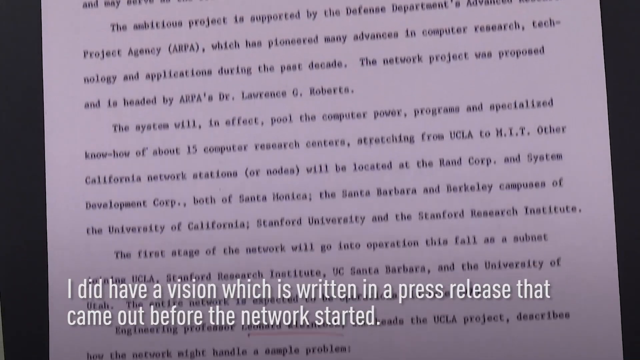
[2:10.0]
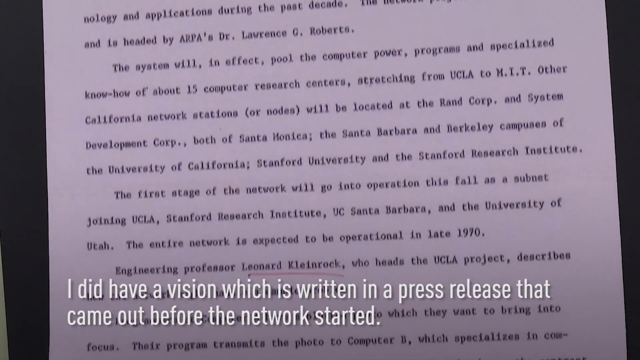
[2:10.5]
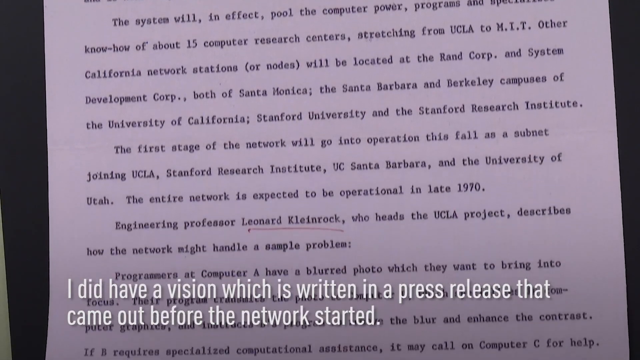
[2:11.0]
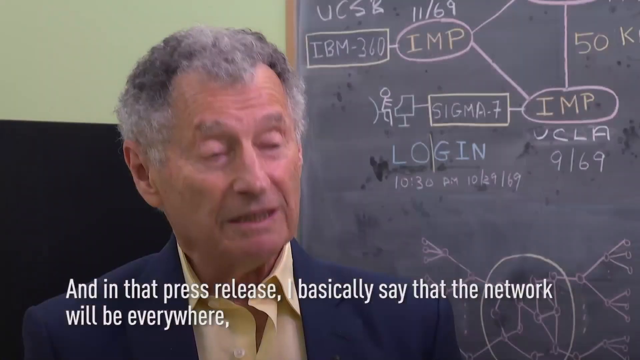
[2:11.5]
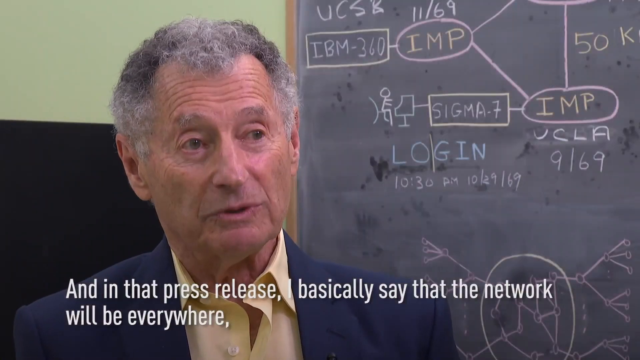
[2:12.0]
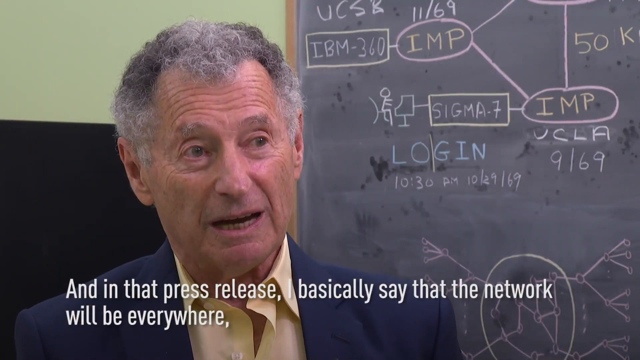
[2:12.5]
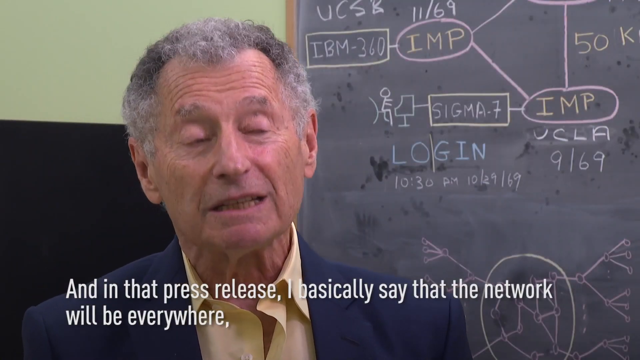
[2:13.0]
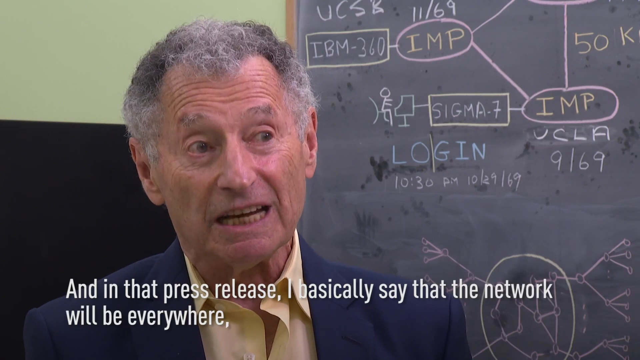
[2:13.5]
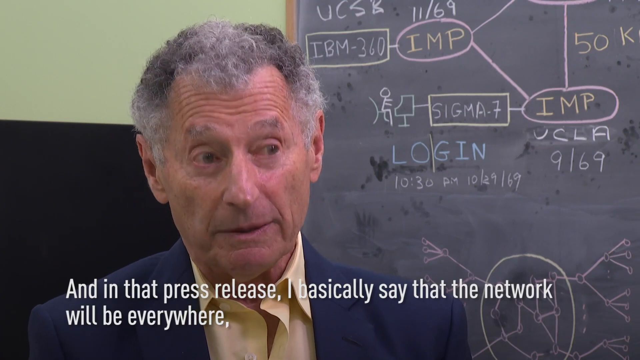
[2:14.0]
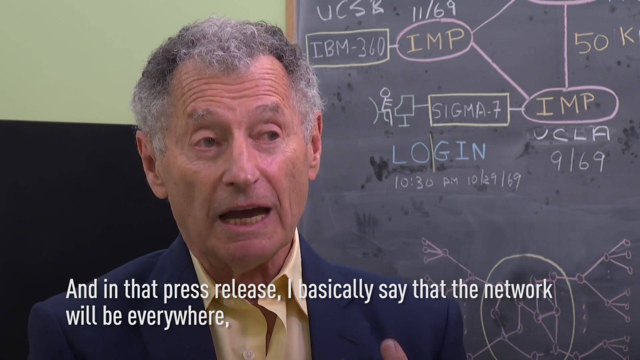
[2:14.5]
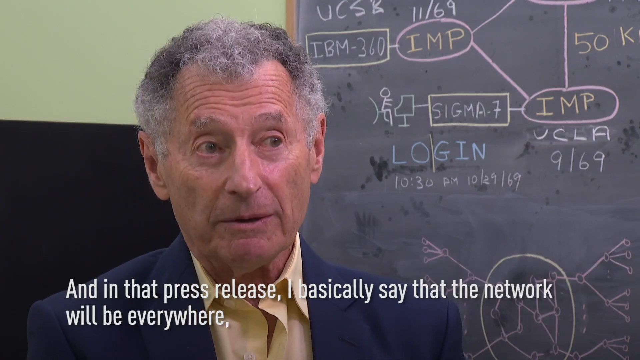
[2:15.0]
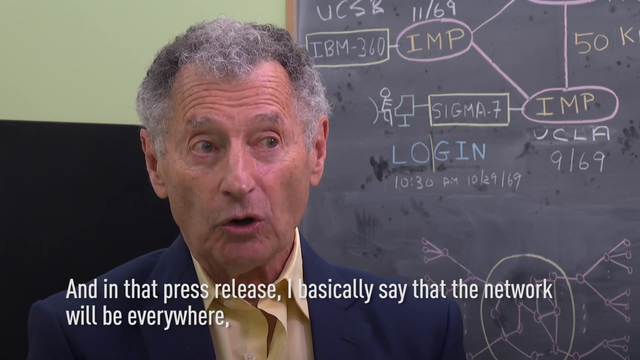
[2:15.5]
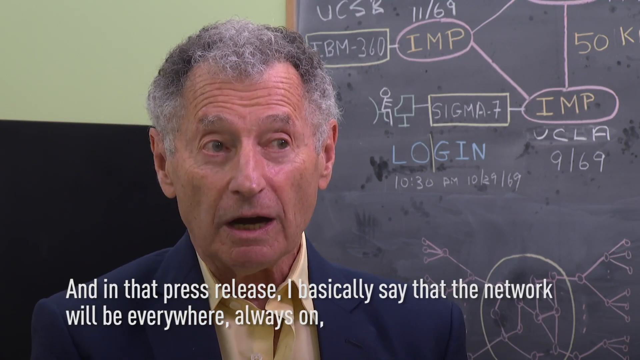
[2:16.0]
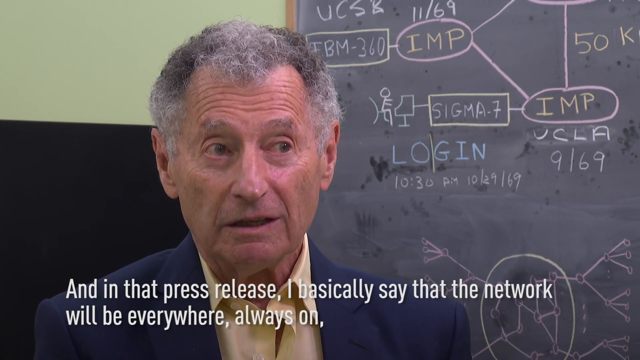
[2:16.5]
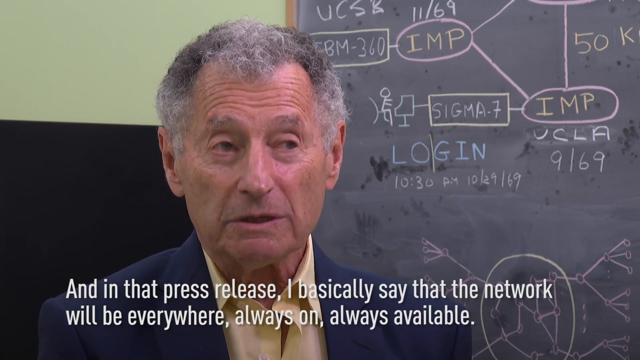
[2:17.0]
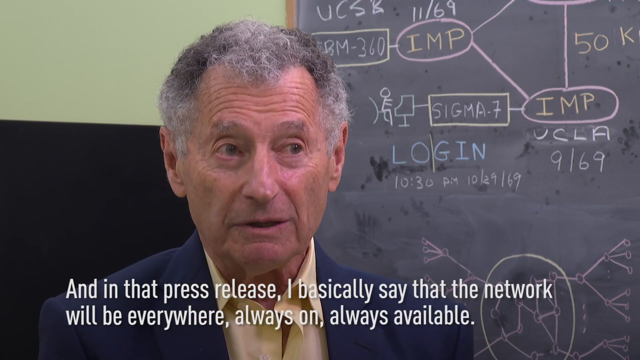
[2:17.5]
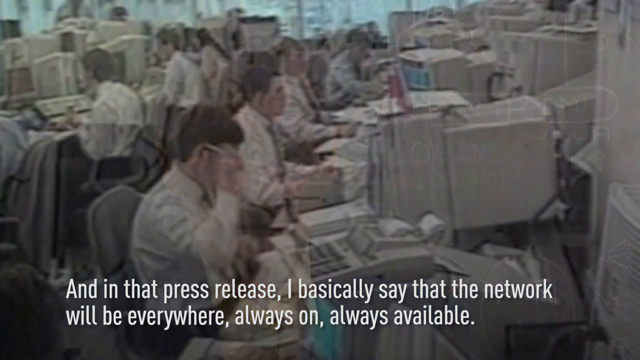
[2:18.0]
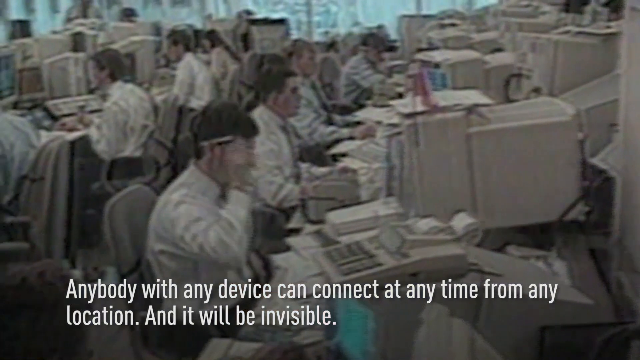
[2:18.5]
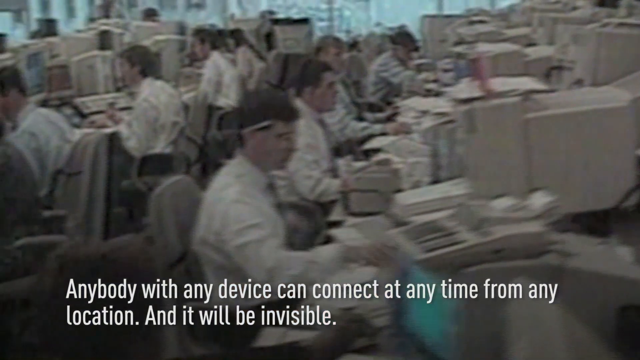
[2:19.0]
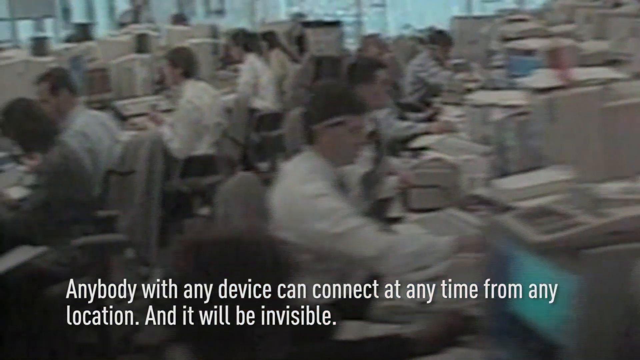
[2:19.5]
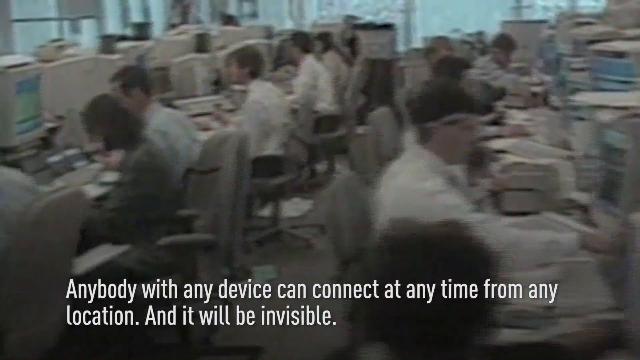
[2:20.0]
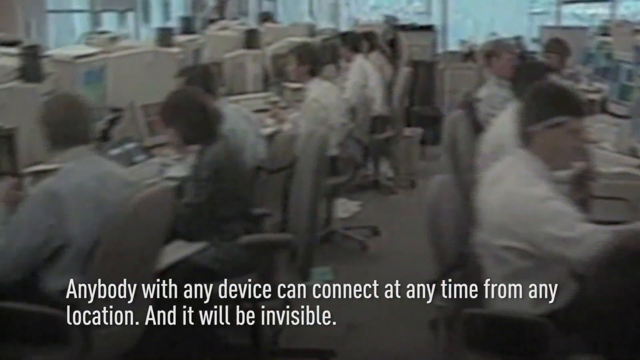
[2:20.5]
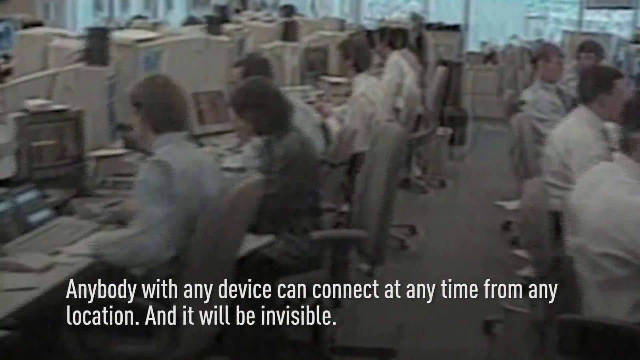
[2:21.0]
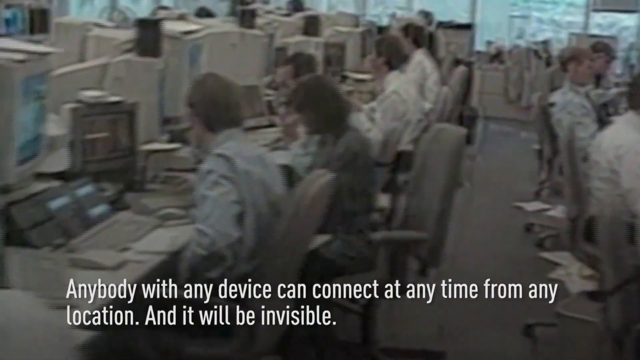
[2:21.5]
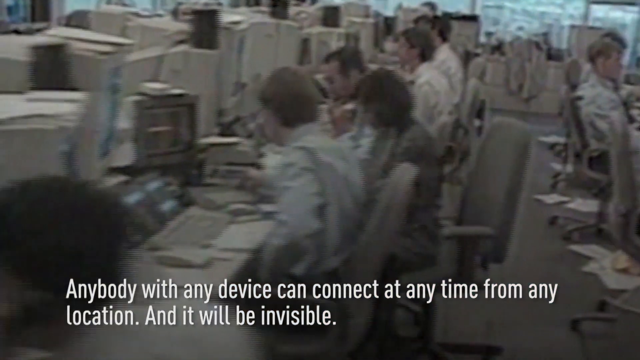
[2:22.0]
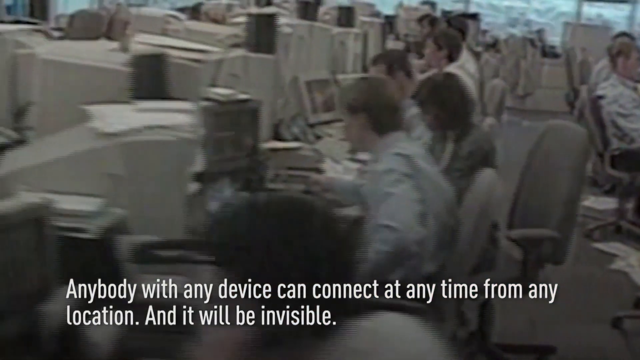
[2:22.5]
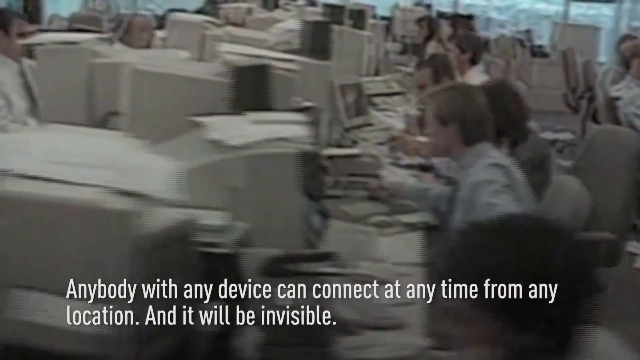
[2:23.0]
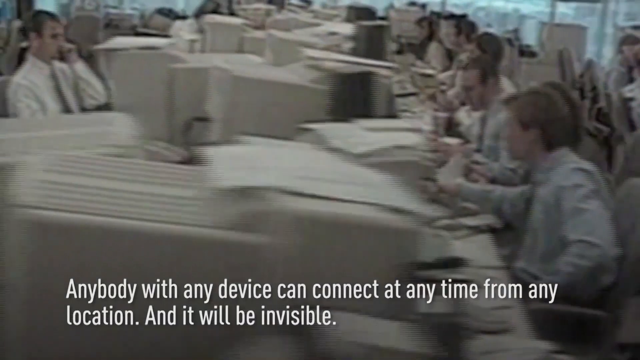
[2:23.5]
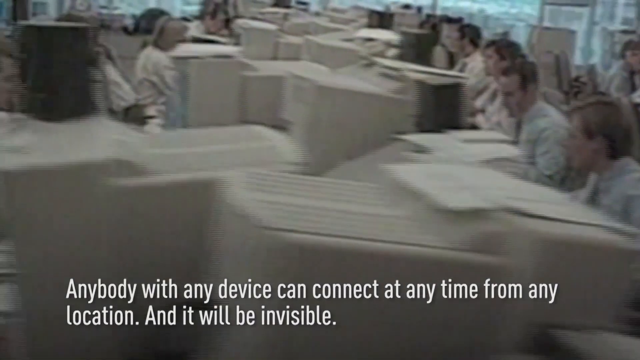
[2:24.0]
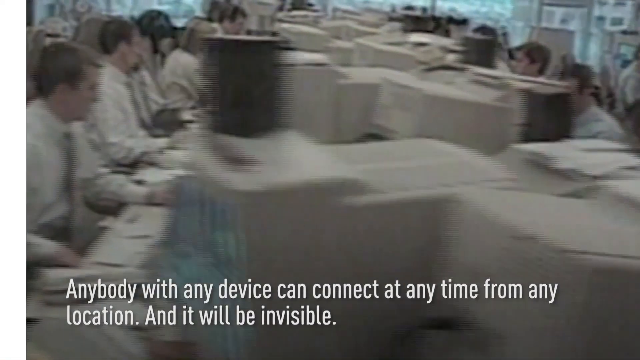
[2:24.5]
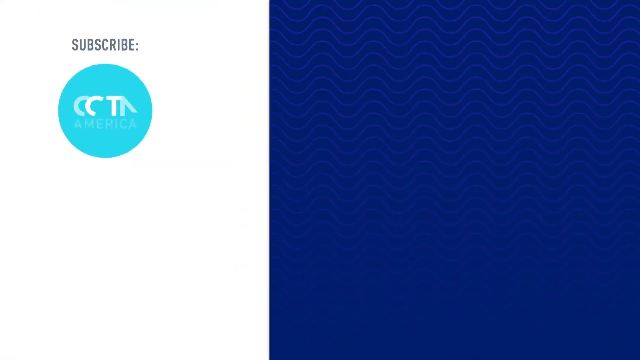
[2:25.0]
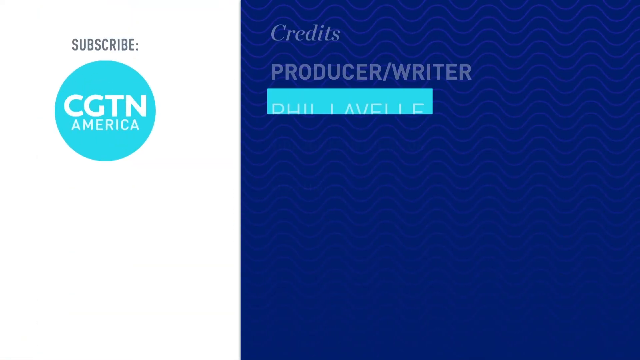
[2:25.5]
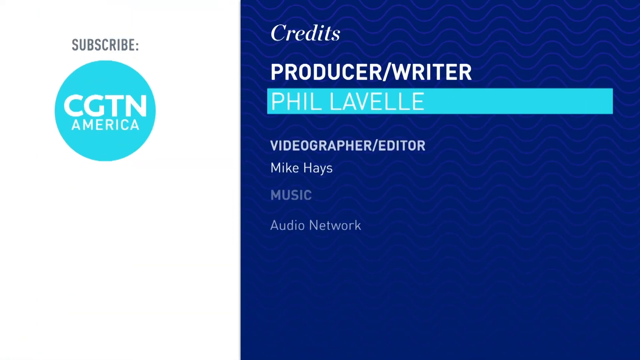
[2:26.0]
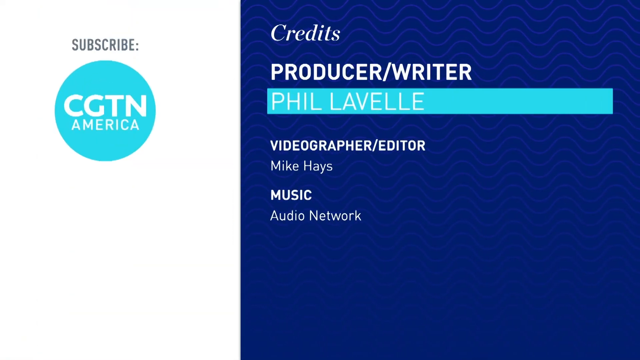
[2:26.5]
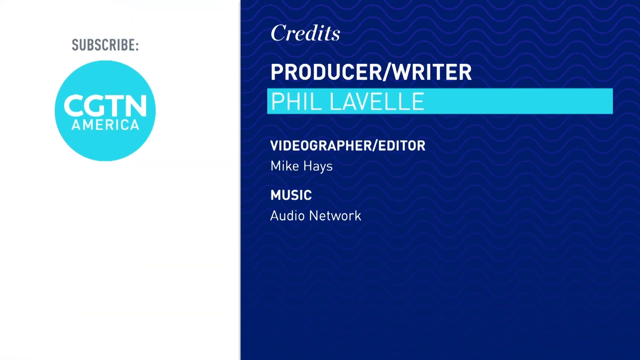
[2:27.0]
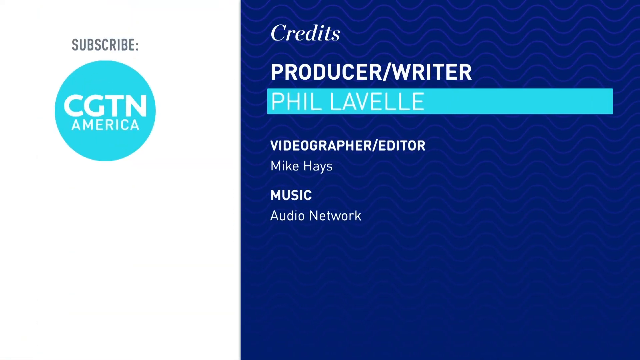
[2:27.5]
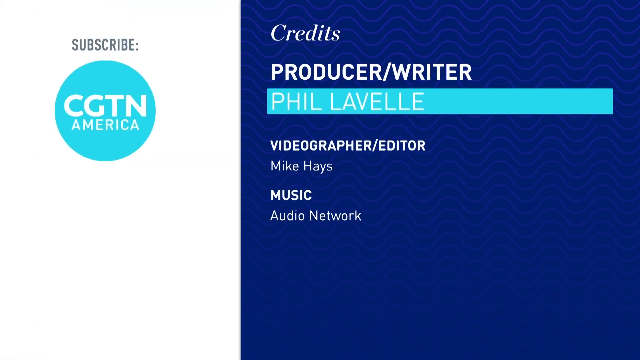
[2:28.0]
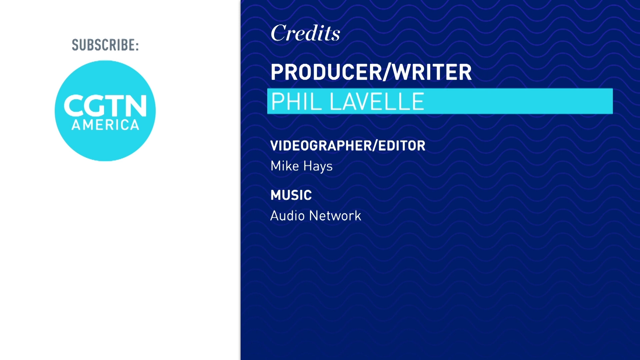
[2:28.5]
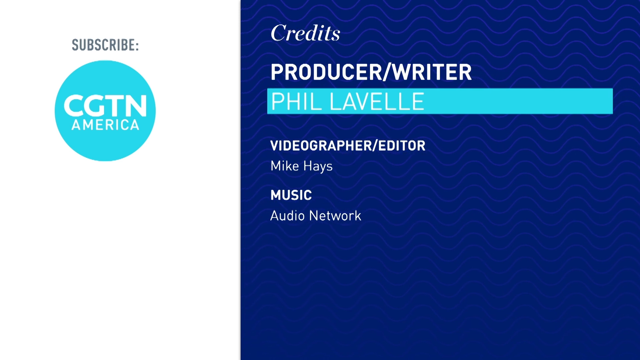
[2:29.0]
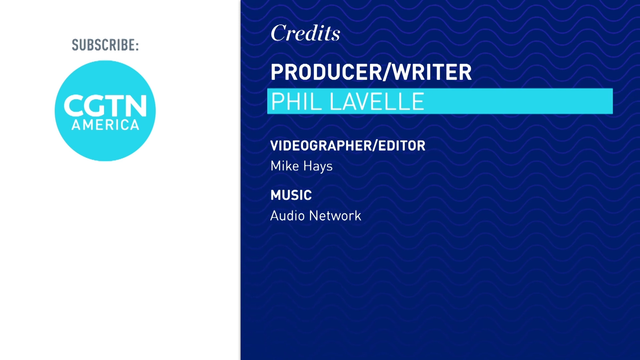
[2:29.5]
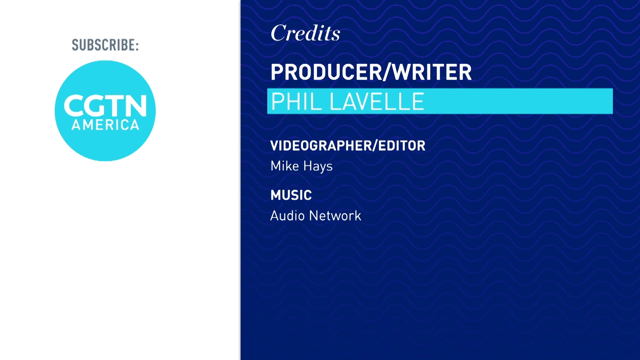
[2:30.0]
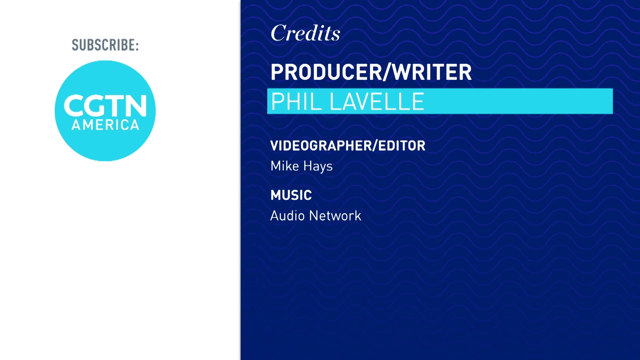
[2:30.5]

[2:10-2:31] The camera scrolls over a typed press release while the caption reads, "I did have a vision which is written in a press release that came out before the network started." The scene switches to a man with gray hair sitting in a room with a chalkboard behind him, captioned "And in that press release I basically say that the network will be everywhere, always on, always available." Then a large office appears with tables holding rows of computers and people sitting in office chairs in front of them, with the caption "Anybody with any device can connect at any time from any location and it will be invisible." The camera pans over the very large office, showing rows of tables with people seated in office chairs working at computer terminals. An end screen follows: the left side says "Subscribe: CGTN America" and the right side says "Credits, Producer/ Writer Phil Lavelle Videographer/Editor Mike Hayes" and "Music Audio Network."